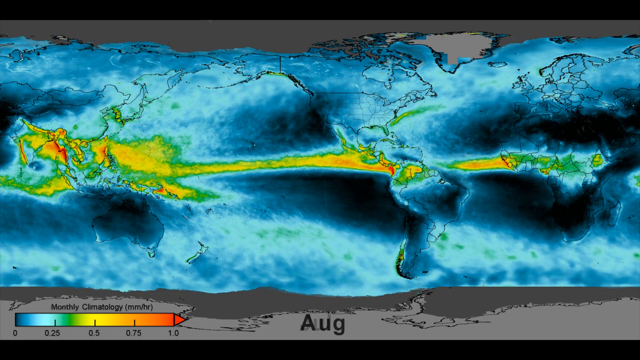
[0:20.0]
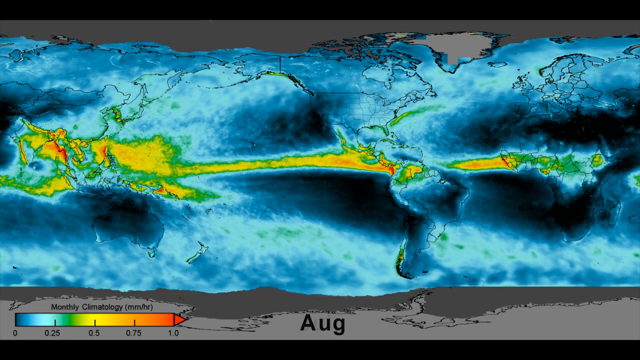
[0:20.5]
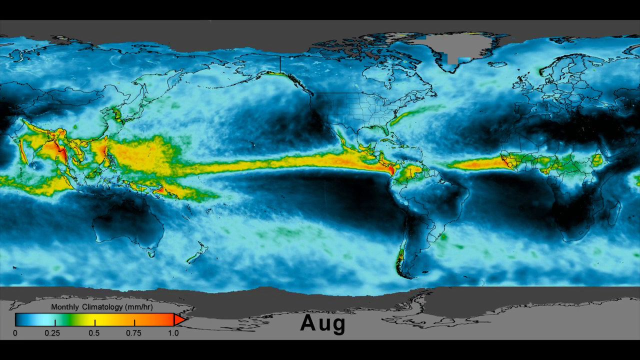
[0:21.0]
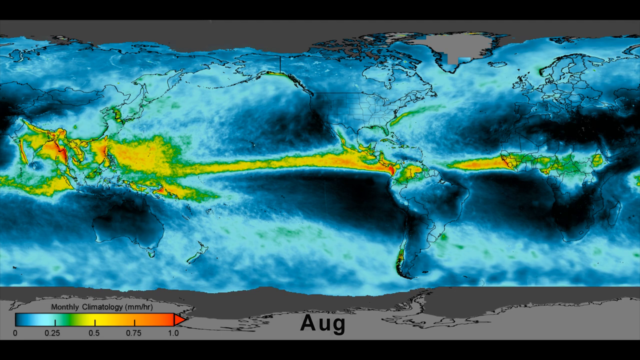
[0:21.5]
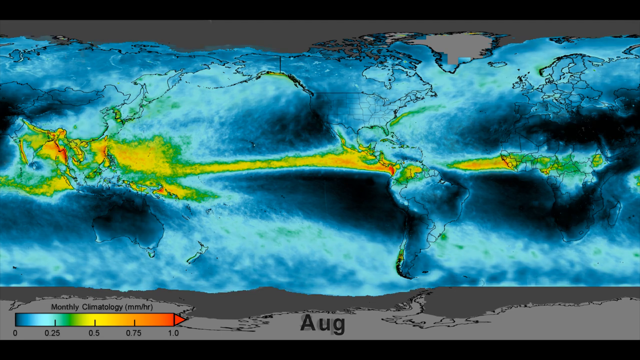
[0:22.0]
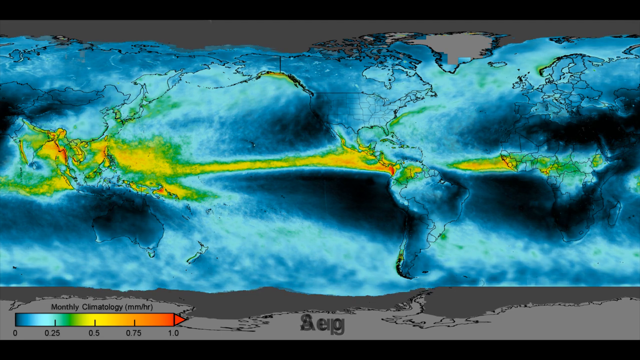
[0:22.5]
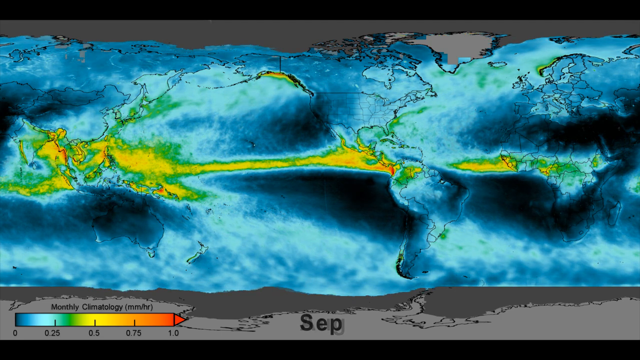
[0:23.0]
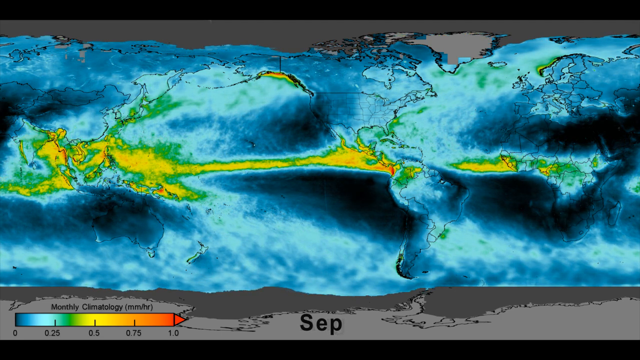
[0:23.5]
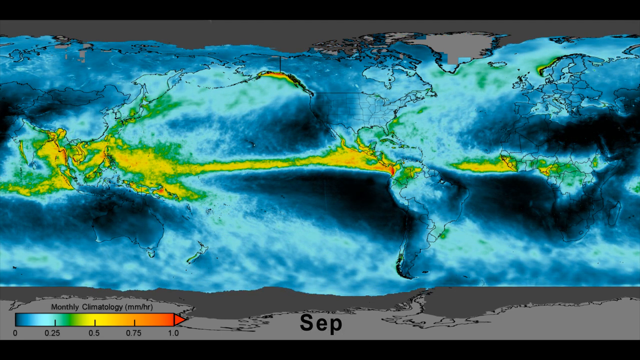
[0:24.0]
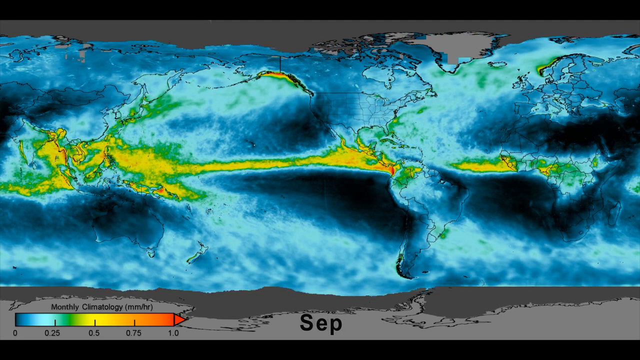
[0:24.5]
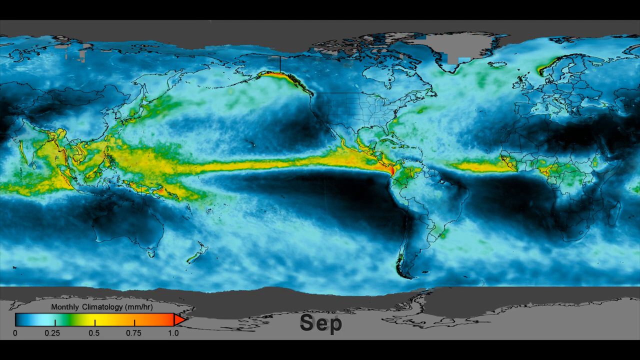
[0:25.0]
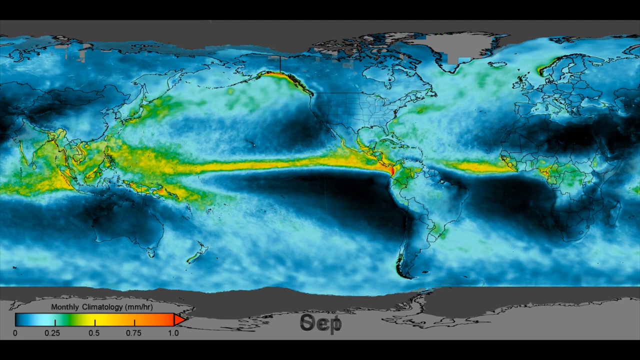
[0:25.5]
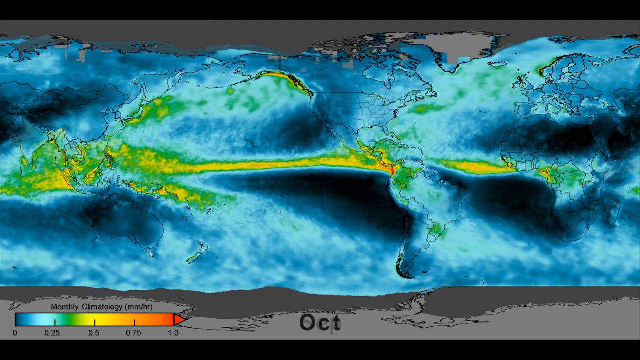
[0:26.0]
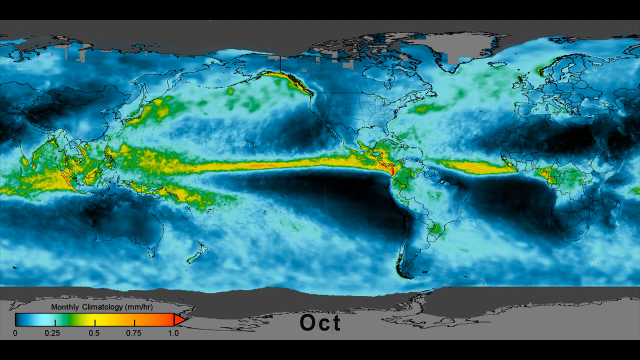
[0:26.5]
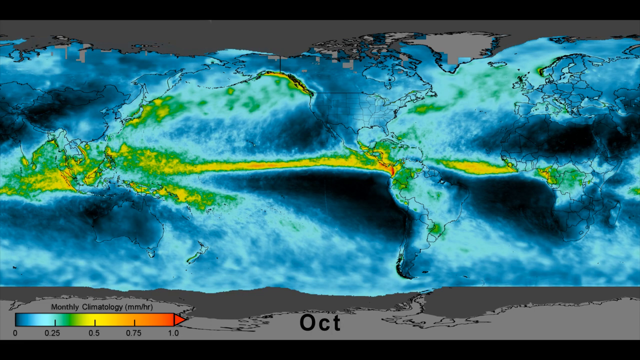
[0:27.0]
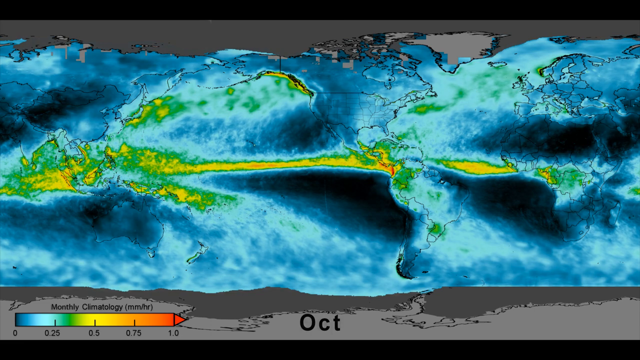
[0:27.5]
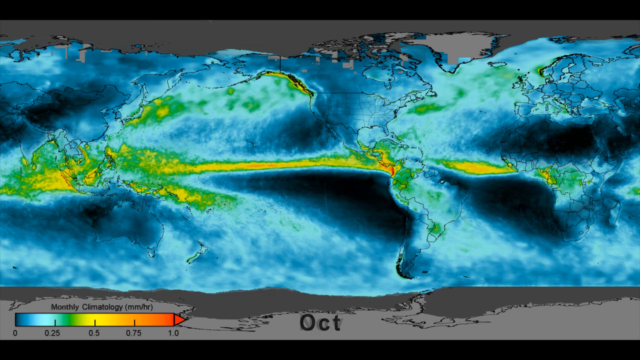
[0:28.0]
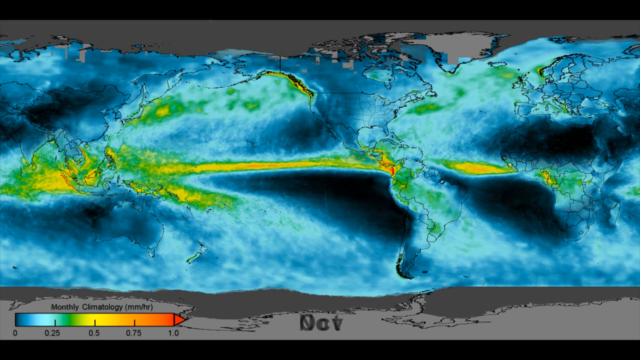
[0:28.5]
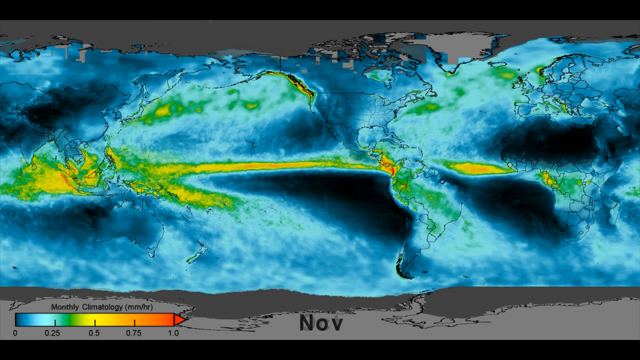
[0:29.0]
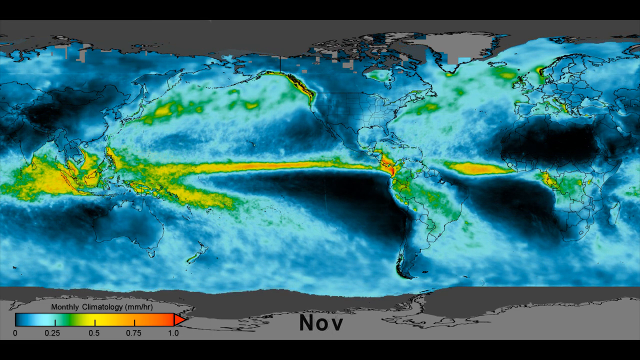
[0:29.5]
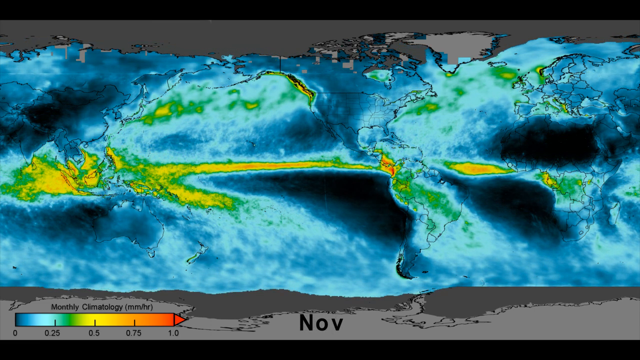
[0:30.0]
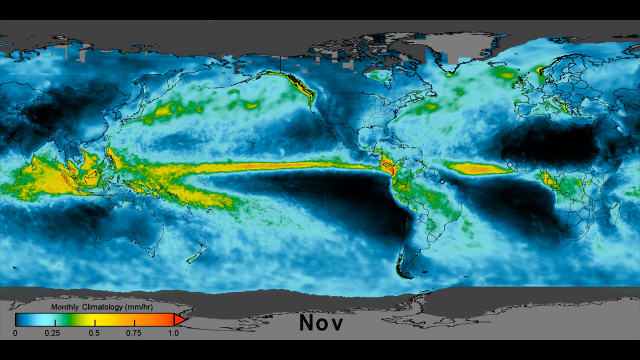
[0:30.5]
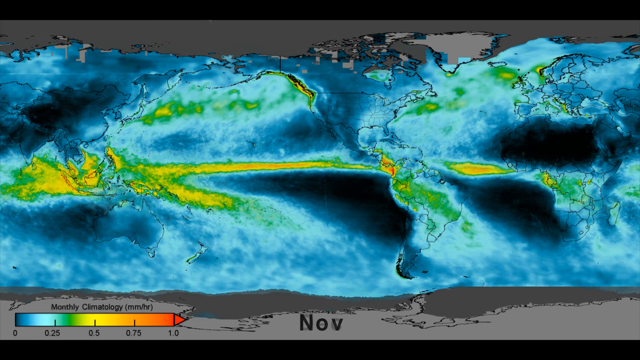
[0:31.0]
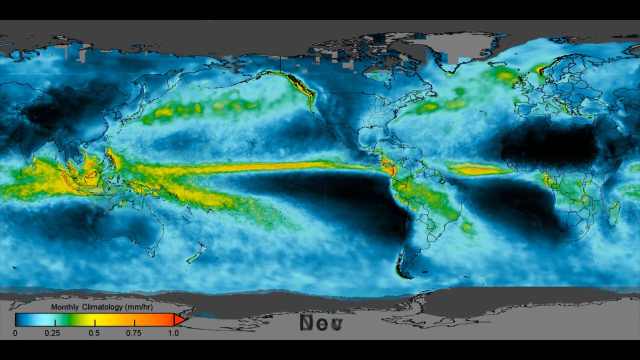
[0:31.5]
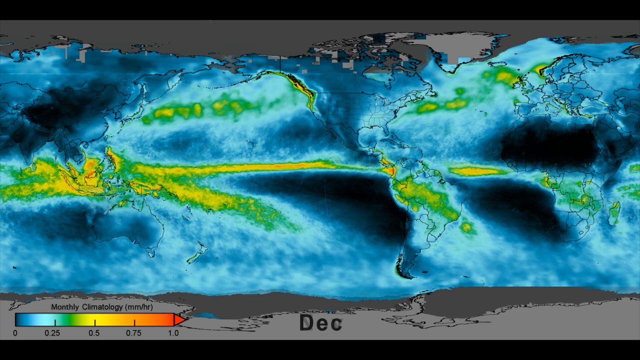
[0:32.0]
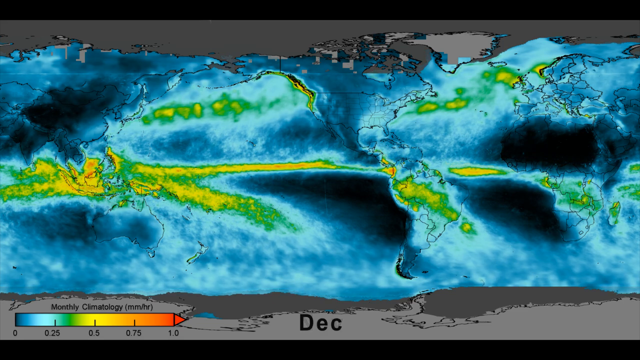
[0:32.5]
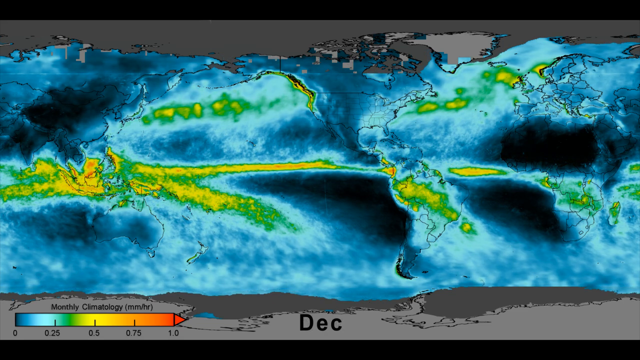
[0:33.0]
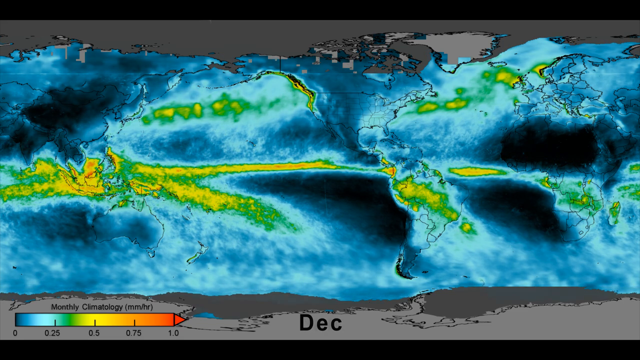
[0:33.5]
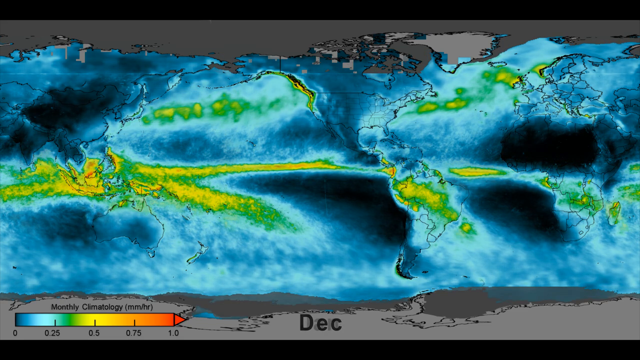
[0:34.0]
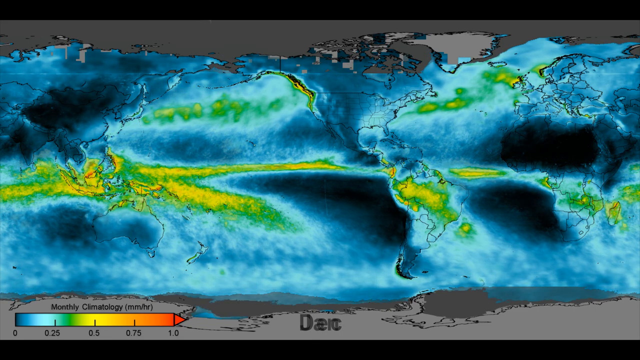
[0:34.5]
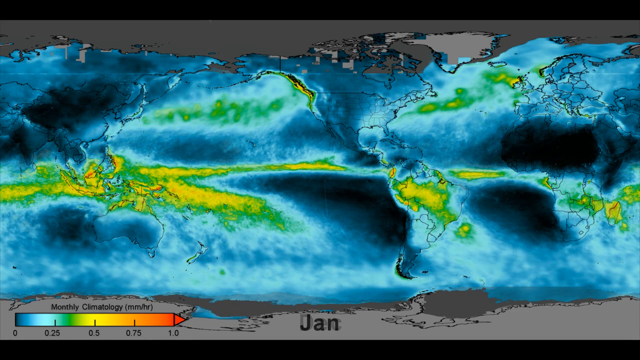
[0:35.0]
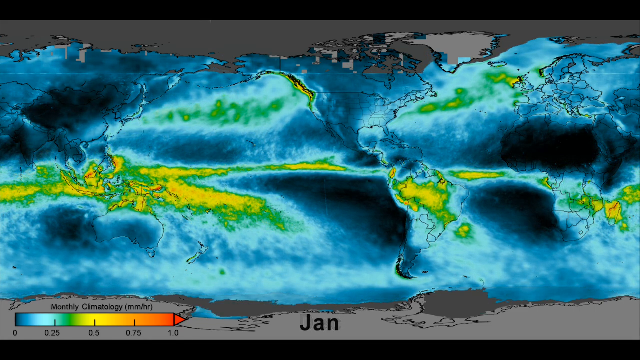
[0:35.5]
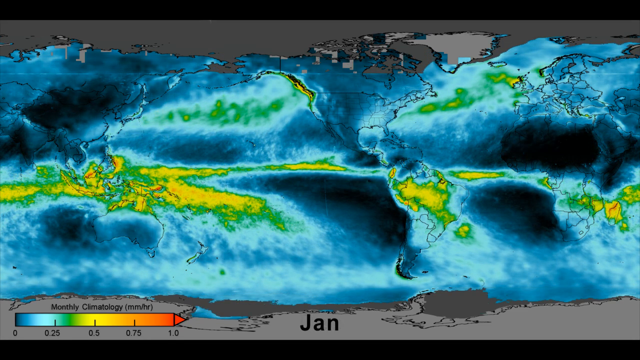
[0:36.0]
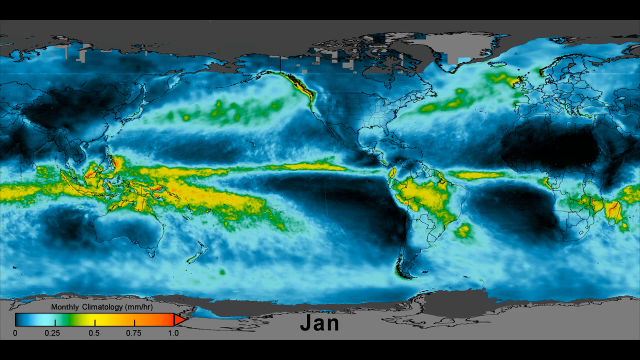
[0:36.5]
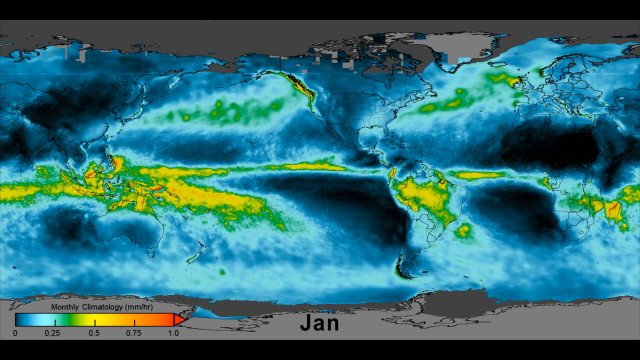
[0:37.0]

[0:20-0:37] The weather thermal imaging continues, now apparently showing September, October, November, December and even January, with the month abbreviations changing at the bottom. The colors shift only slightly and subtly as the months pass: a little more red in some areas, or a little less red in the center. There are yellows and greens, with mostly blues around the outsides of the images. It looks like a map, kind of an angled map, with black outlines showing the different areas. The key at the bottom shows blue graduating into red, and the top and bottom are more gray. The color is concentrated in the center of the image, where the yellows, greens and reds appear, with very little red and orange. It apparently shows weather patterns through thermal imaging.